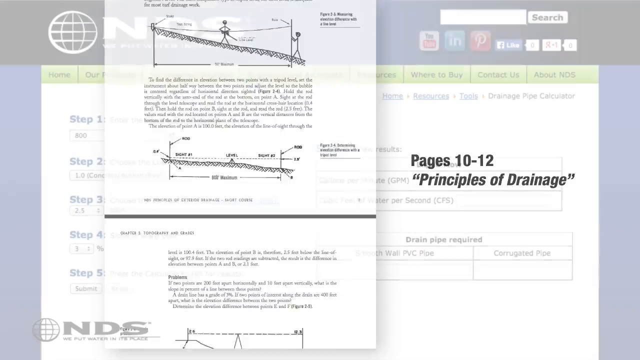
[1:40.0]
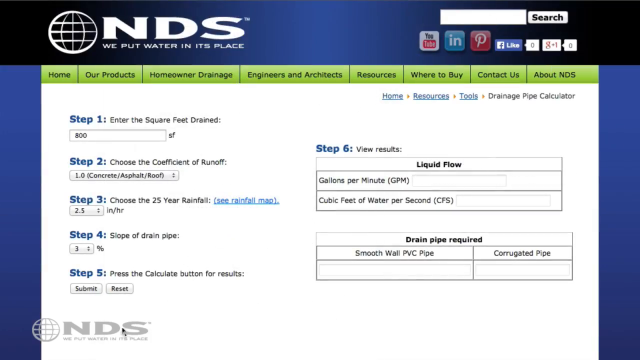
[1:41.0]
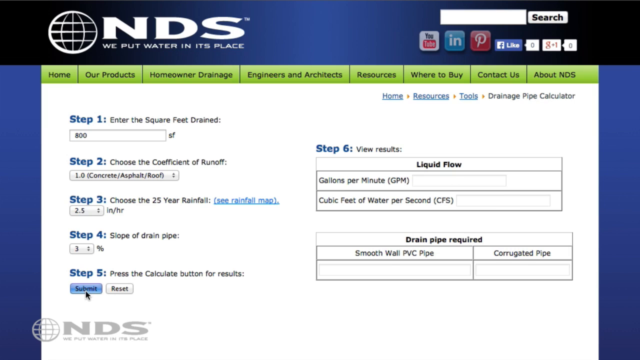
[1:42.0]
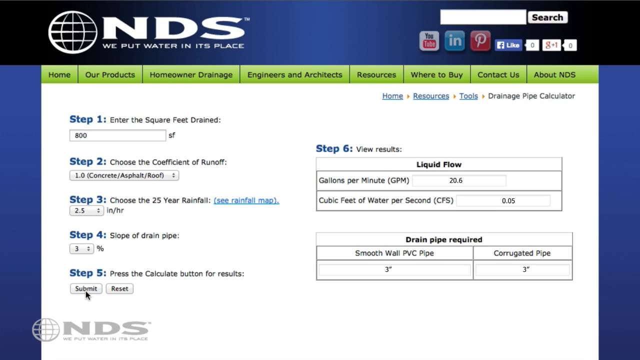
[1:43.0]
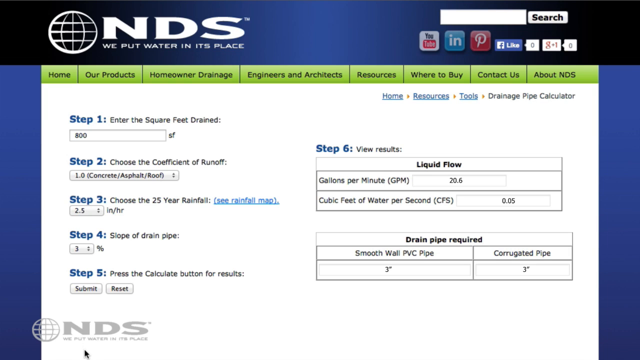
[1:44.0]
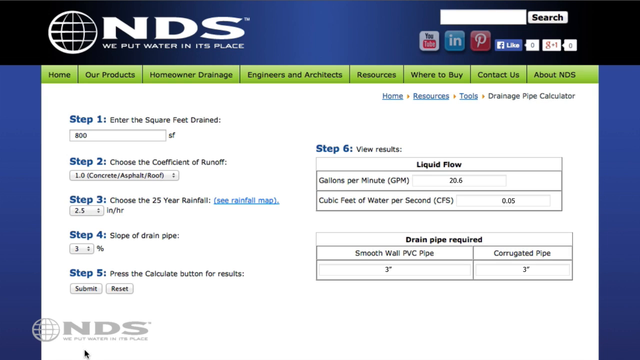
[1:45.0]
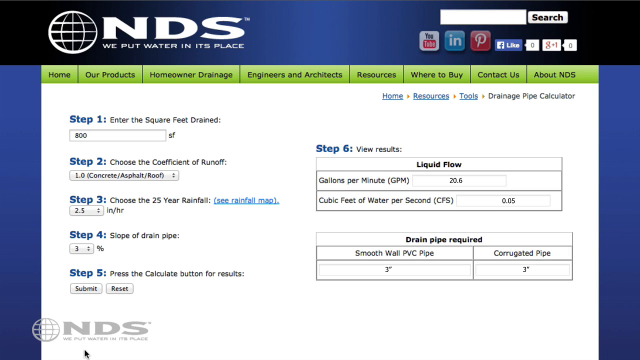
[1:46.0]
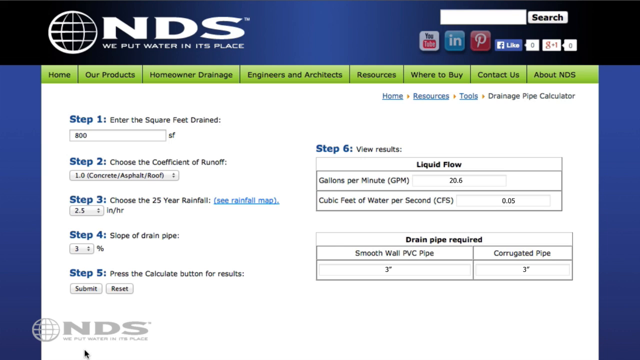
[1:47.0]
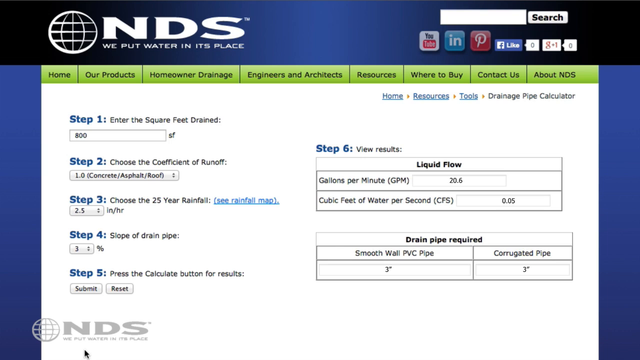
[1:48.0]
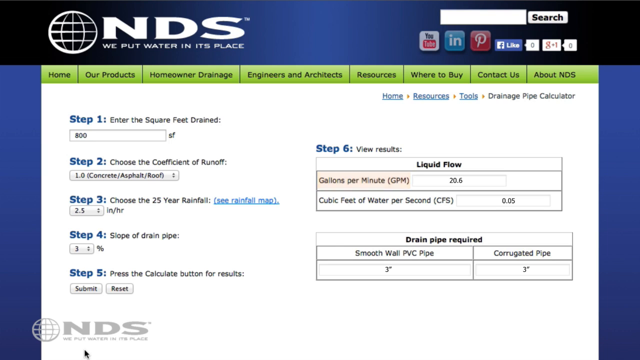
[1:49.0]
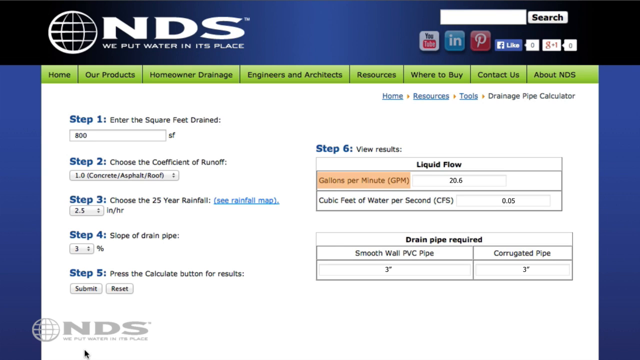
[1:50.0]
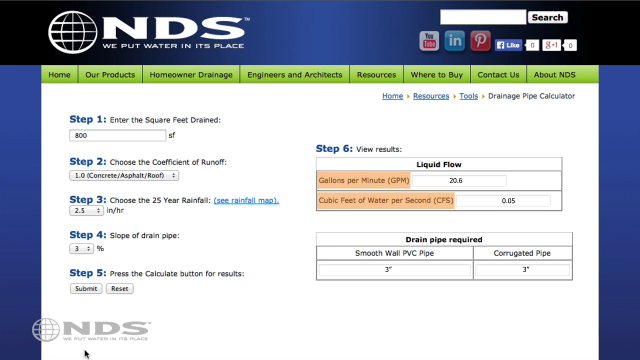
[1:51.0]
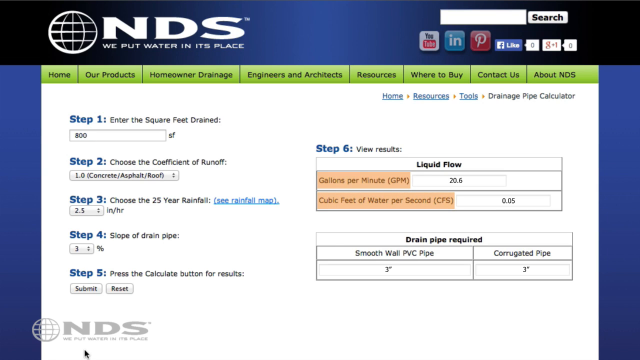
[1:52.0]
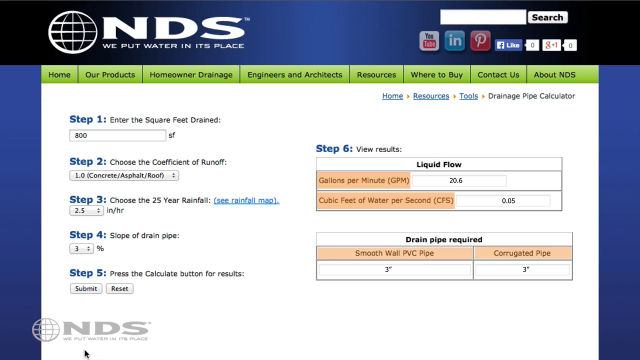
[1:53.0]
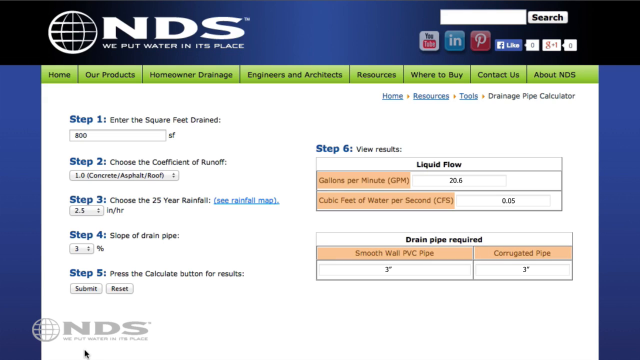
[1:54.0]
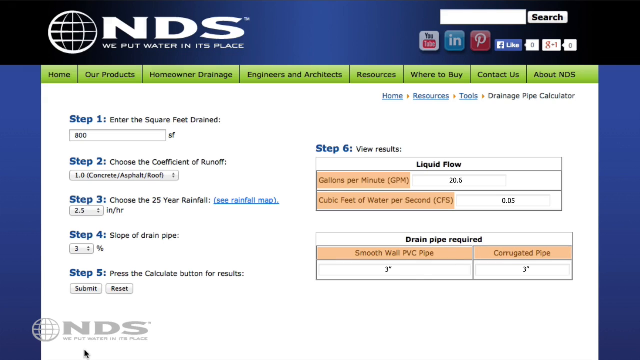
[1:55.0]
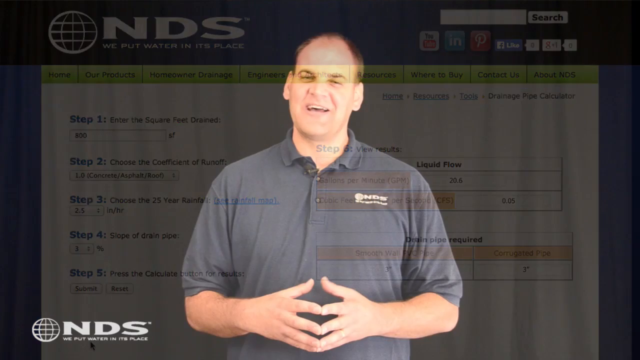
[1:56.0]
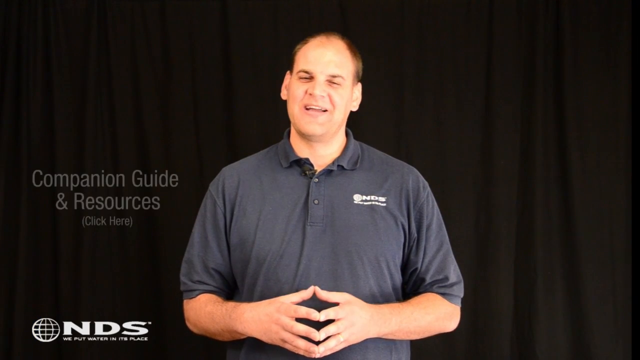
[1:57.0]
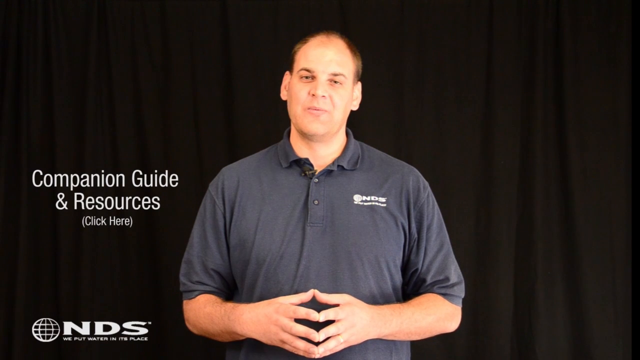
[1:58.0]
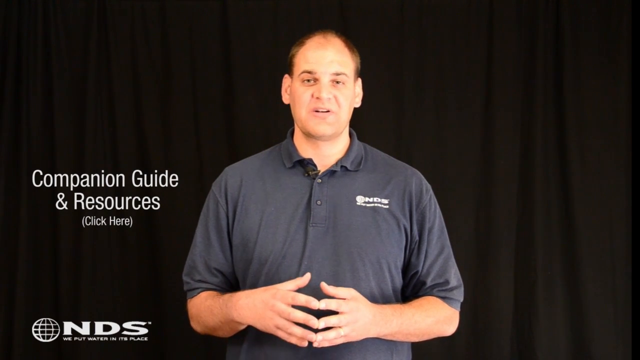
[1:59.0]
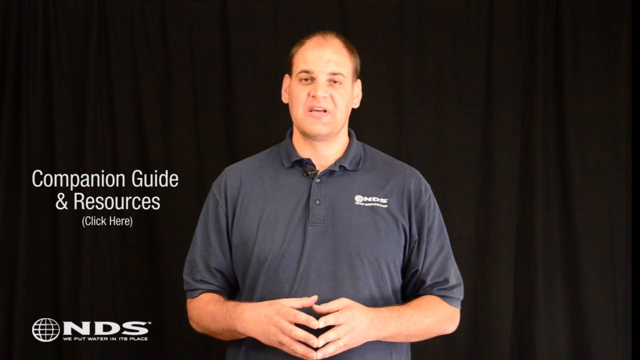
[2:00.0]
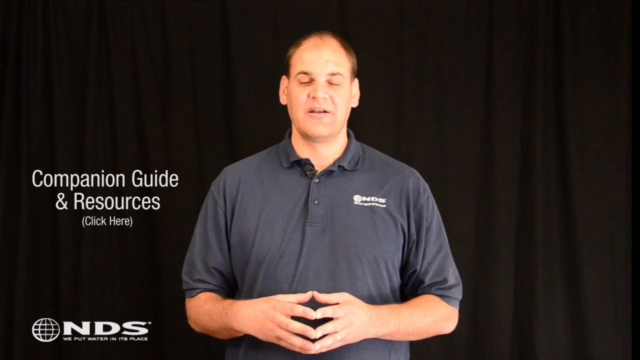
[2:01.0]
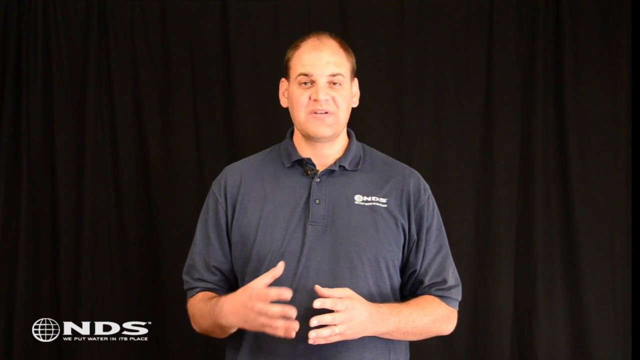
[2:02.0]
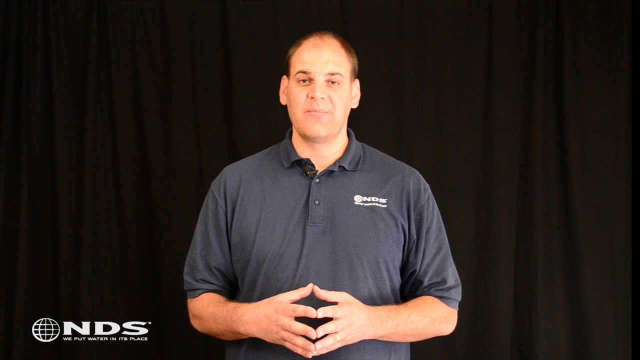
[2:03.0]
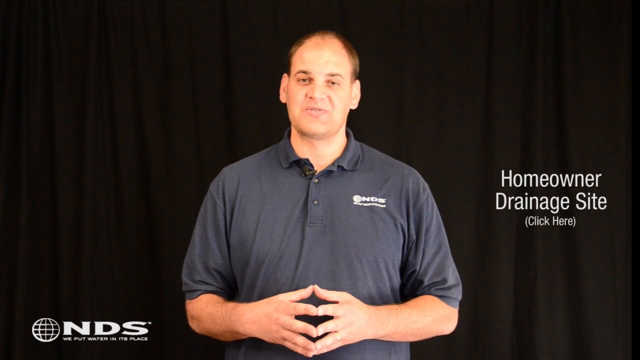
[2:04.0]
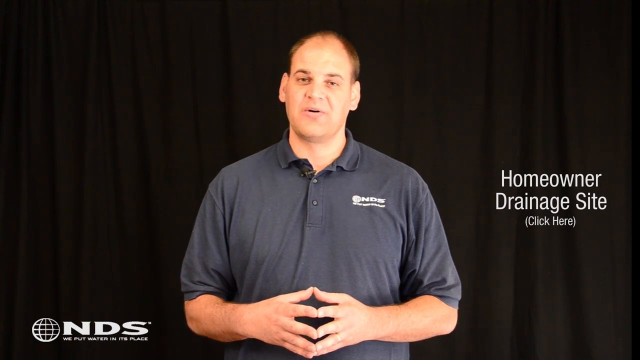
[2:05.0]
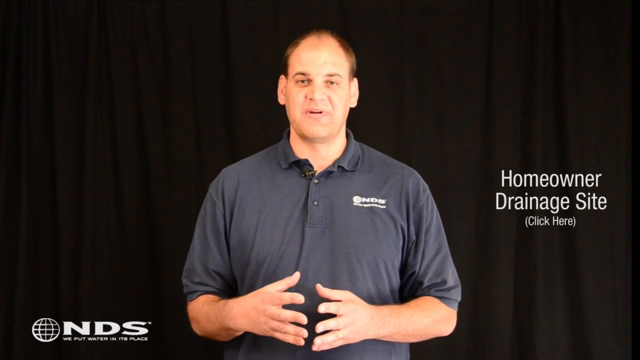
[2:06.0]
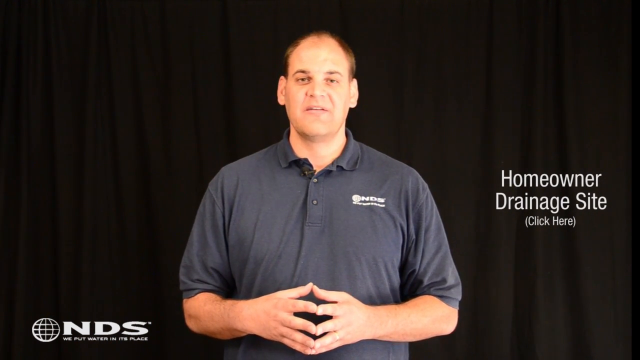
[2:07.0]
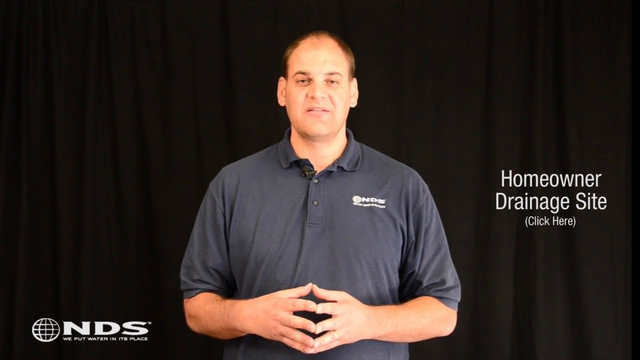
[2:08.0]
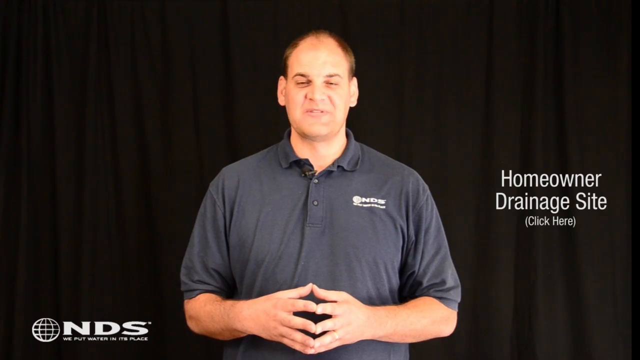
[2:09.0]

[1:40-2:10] The cursor selects something under Step 5, and then orangish highlighting appears on Step 6, under three of the fields on the right side of the form. The video returns to the black curtain backdrop with the young man speaking to the camera and the NDS brand icon at the bottom of the screen. He gestures with his hands, then returns to extended fingertips touching. To his left, as he continues to speak, white text reads "Homeowner Drainage Site", with "click here" in parentheses underneath. He keeps speaking, gesturing with his hands on occasion. The video then goes back to the website with the overlay of pages 10 to 12, "Principles of Drainage".